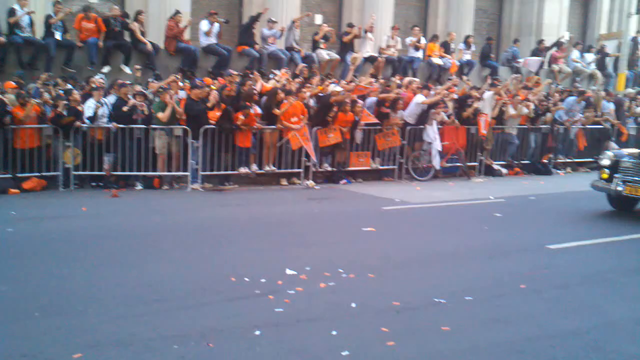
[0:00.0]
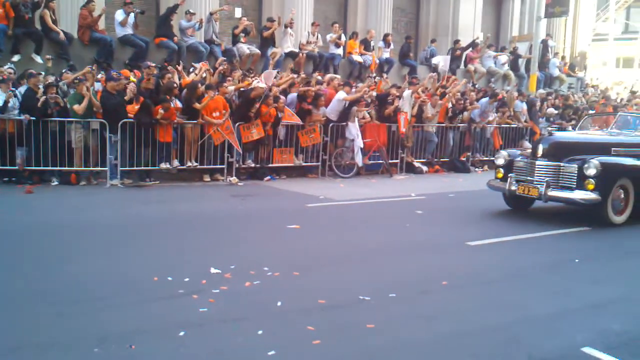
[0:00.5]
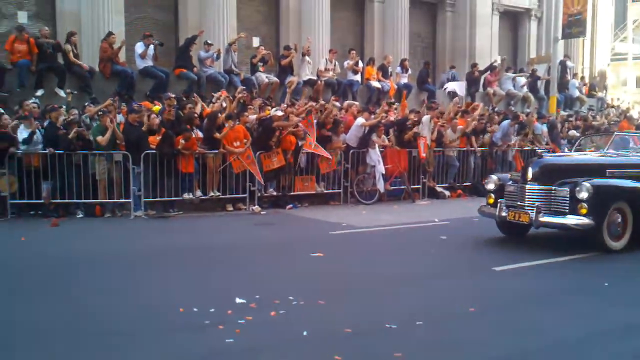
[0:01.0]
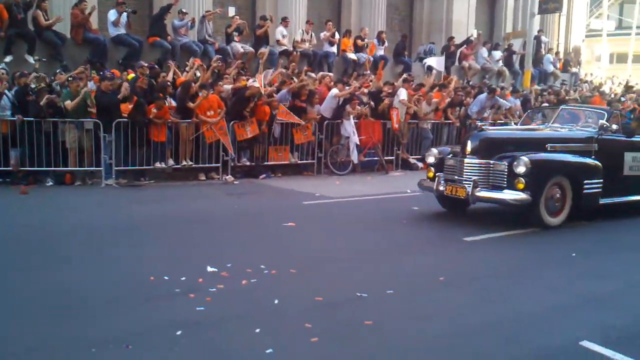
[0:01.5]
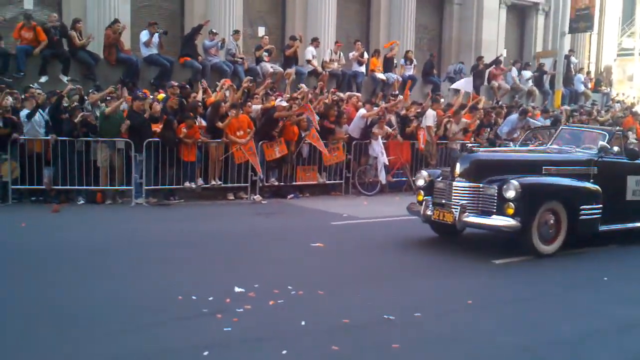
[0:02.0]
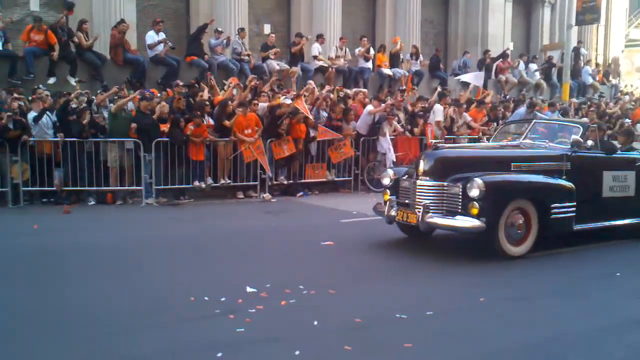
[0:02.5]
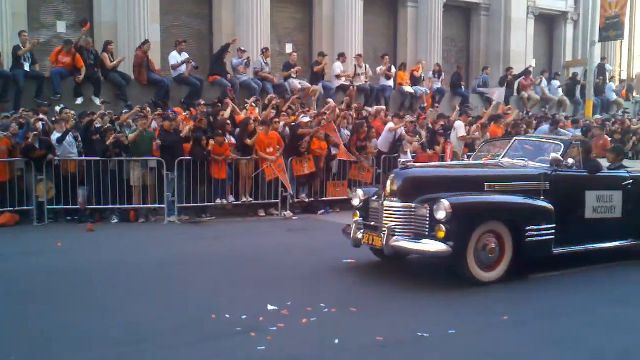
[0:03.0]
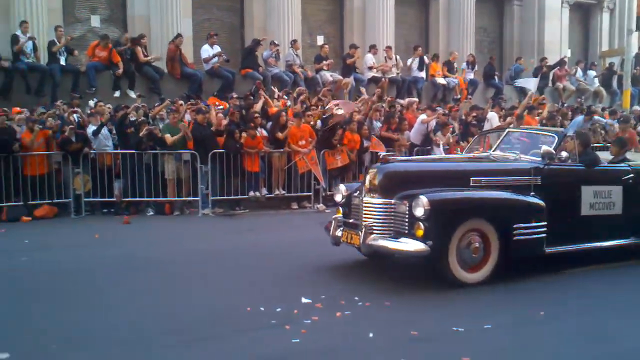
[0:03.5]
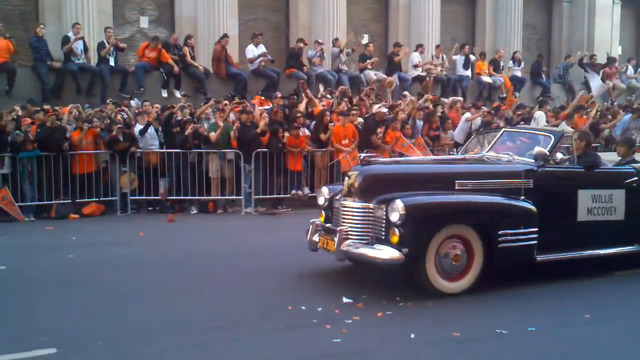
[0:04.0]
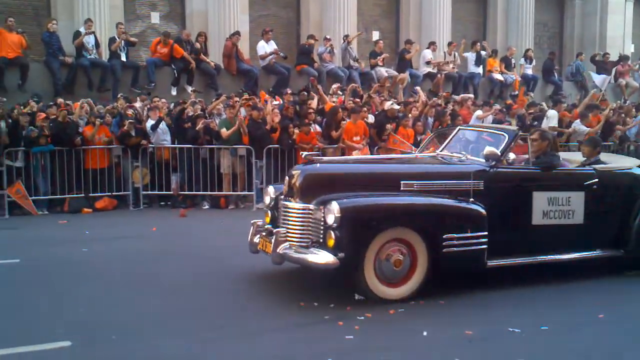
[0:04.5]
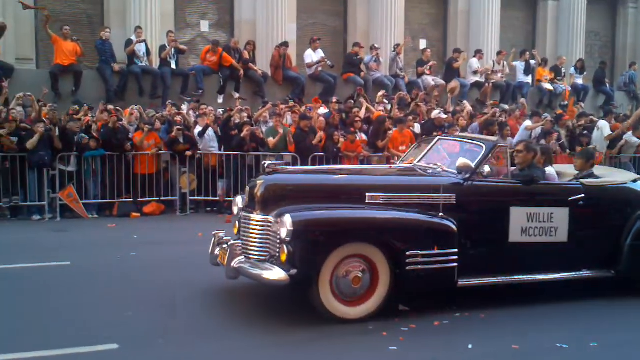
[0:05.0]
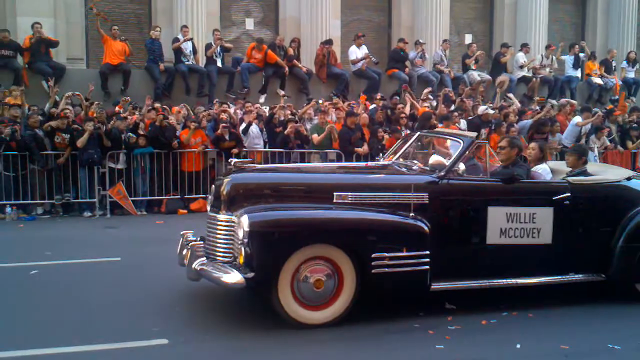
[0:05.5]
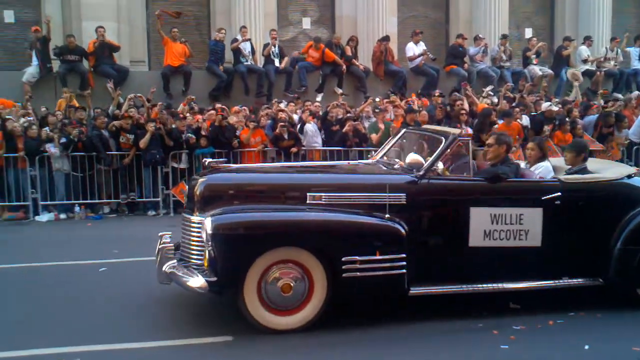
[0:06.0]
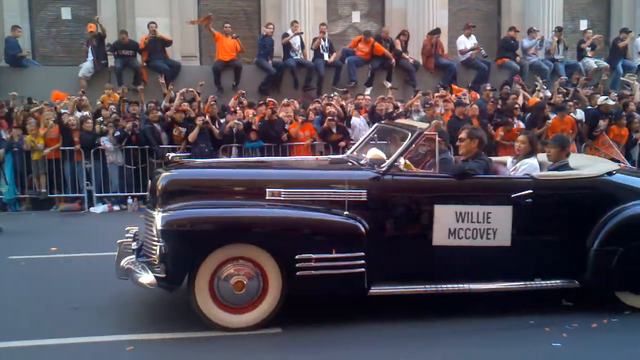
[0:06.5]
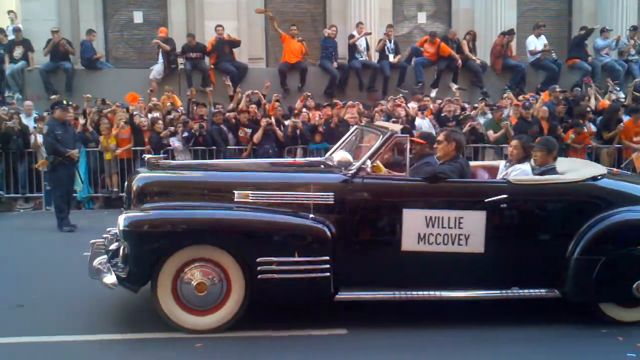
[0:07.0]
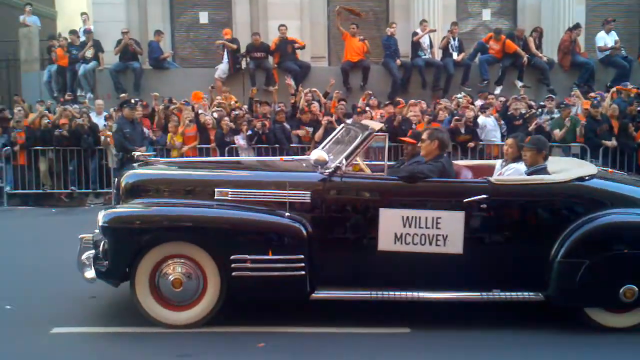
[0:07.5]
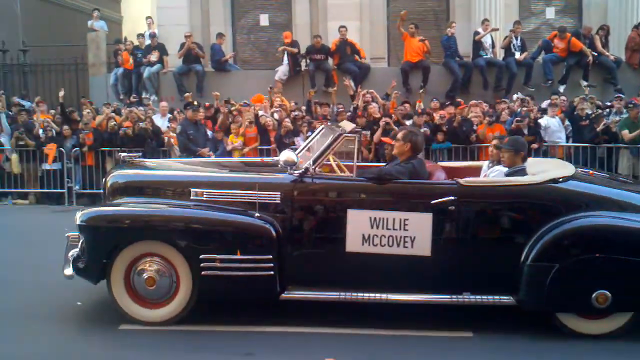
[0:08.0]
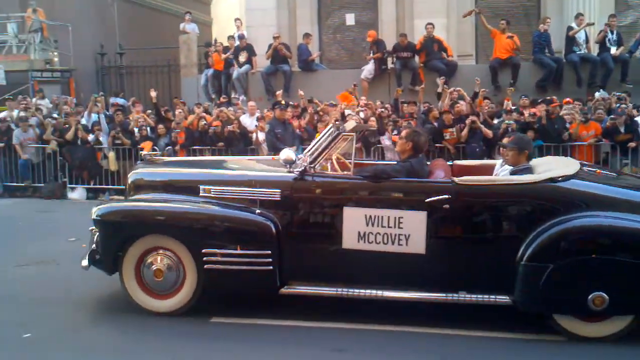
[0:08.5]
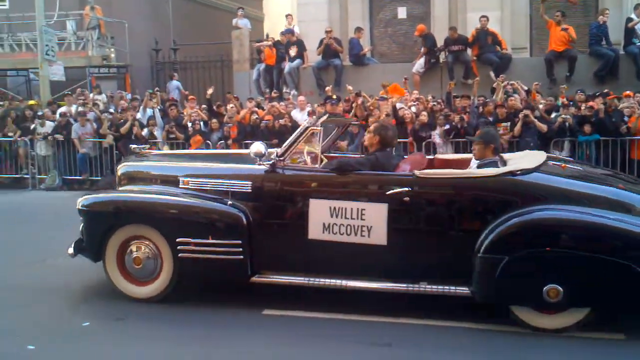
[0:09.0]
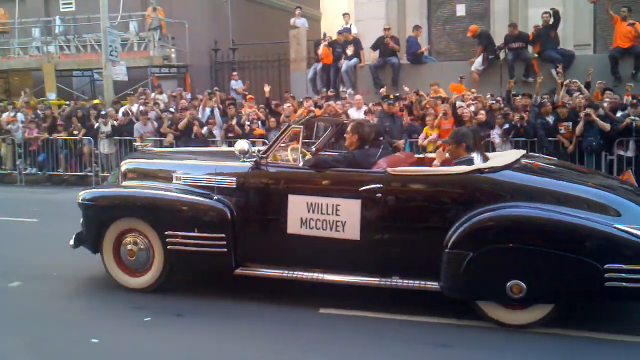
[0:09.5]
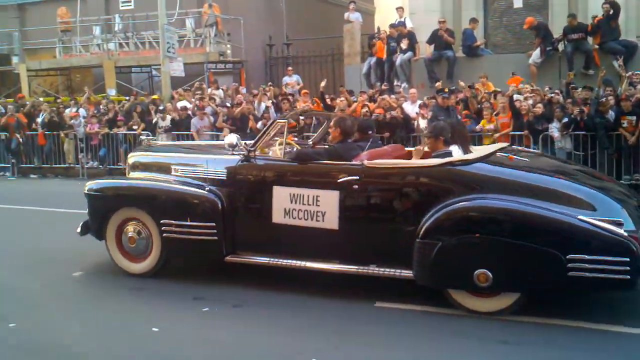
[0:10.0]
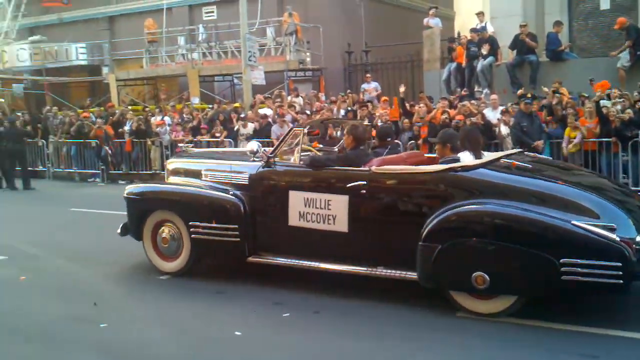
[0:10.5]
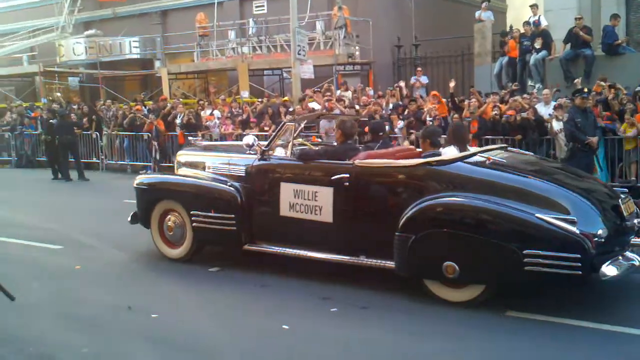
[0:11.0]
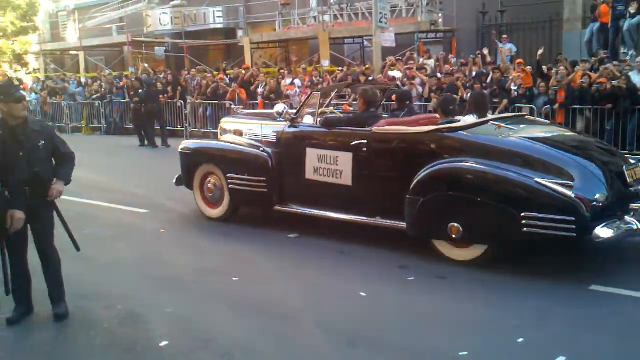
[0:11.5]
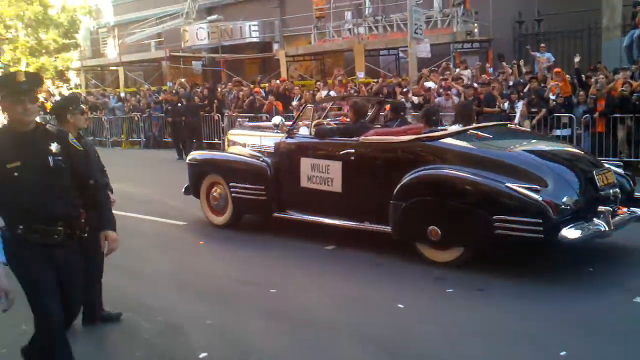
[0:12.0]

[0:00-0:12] A large black vehicle with "William Ocovey" on its side moves along a street, apparently in America, with police along the side of the car. Thousands of people line the route, waving; it is hard to tell whether they are protesting or cheering, and they appear to be waving orange flags. Various buildings stand along the street, and barricades keep the crowd back. Some of the crowd have climbed up onto a wall of a building to get a better view. Overall it looks like some sort of celebration. The car is unusual and elongated, looking like a very special vehicle. It is difficult to tell who is inside, but there appear to be at least four occupants: two in the back, one in the passenger seat, and the driver.